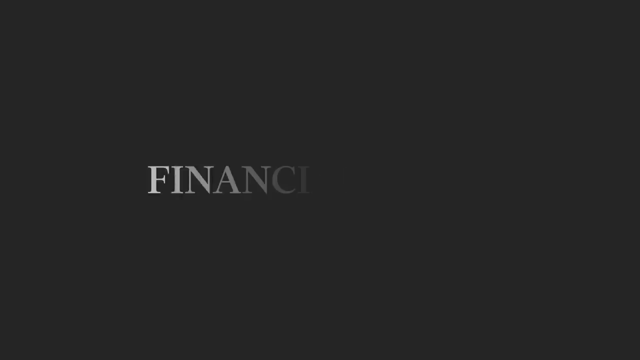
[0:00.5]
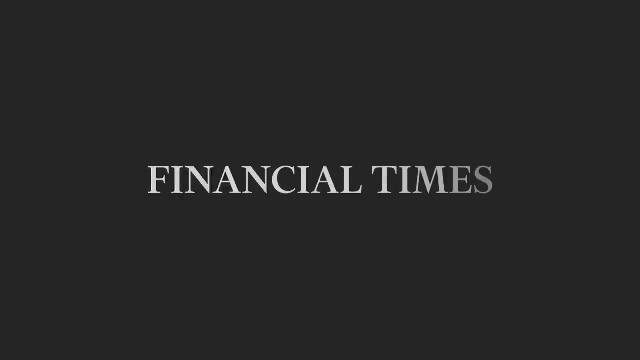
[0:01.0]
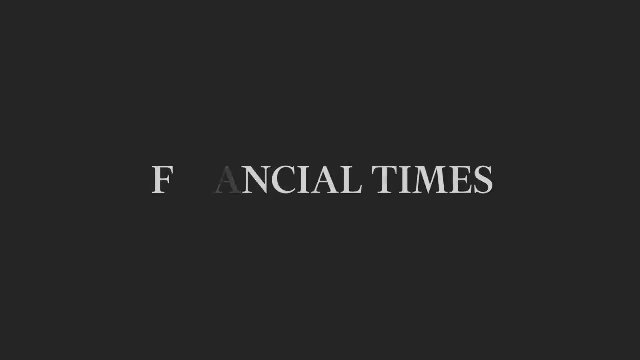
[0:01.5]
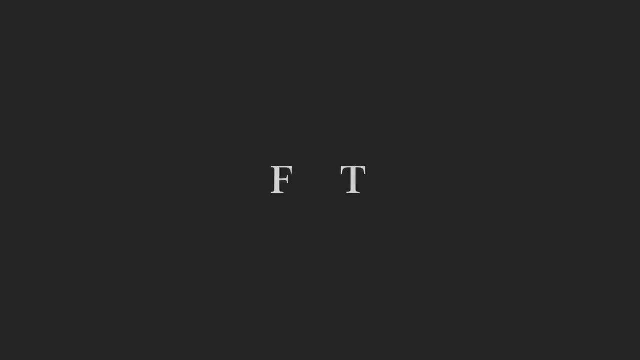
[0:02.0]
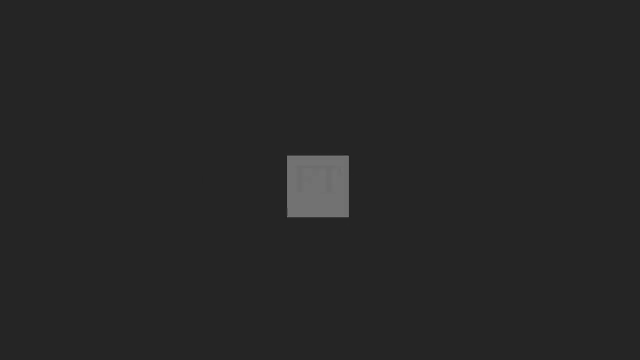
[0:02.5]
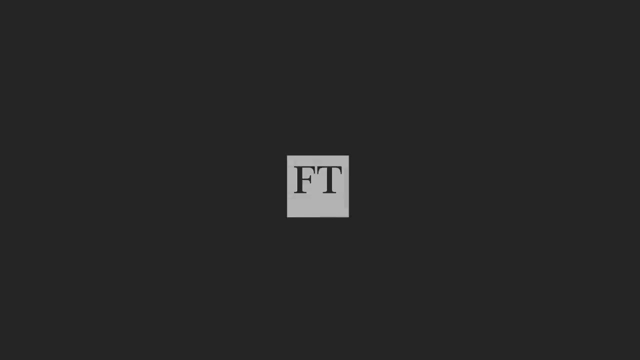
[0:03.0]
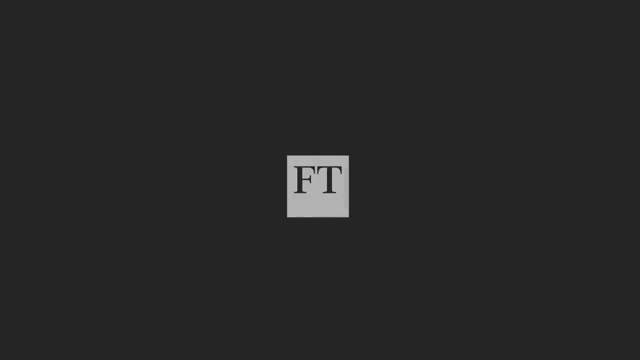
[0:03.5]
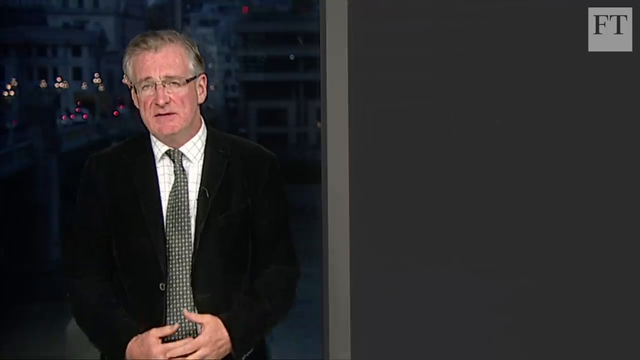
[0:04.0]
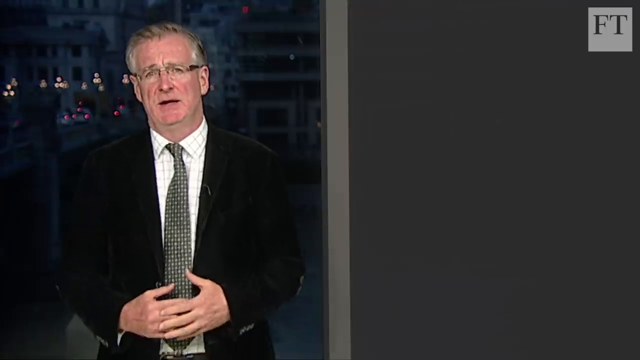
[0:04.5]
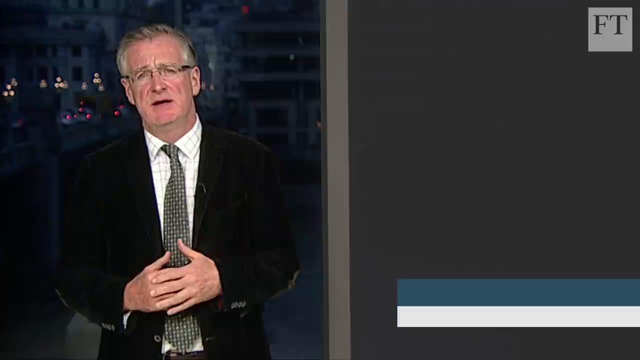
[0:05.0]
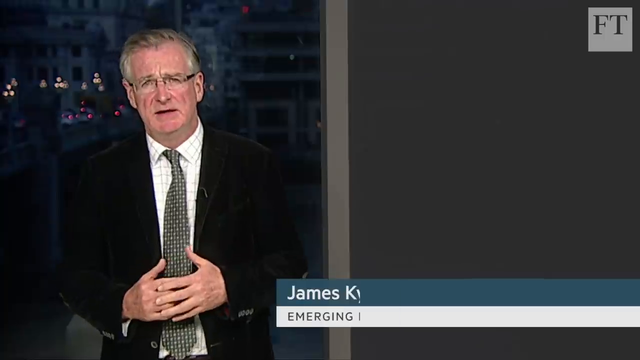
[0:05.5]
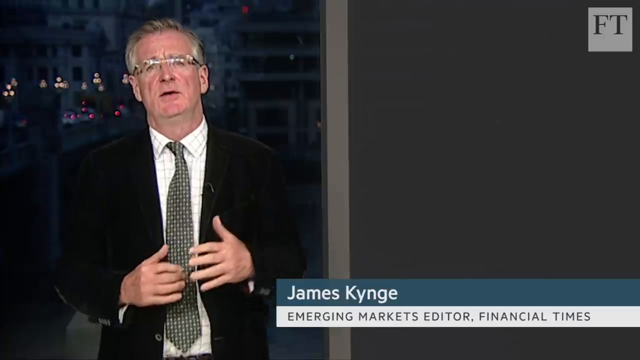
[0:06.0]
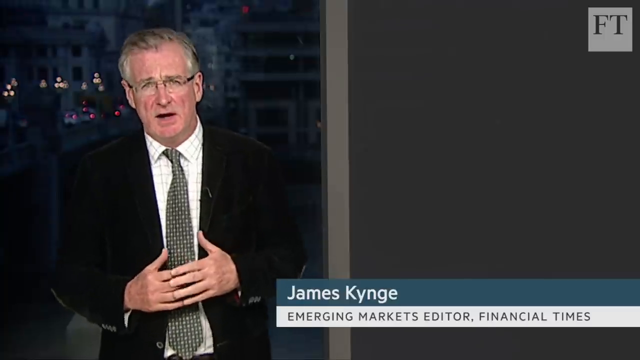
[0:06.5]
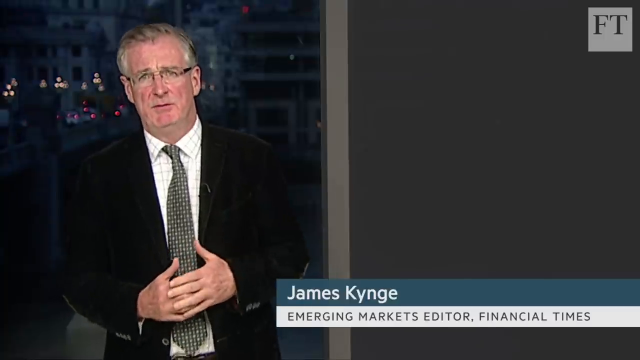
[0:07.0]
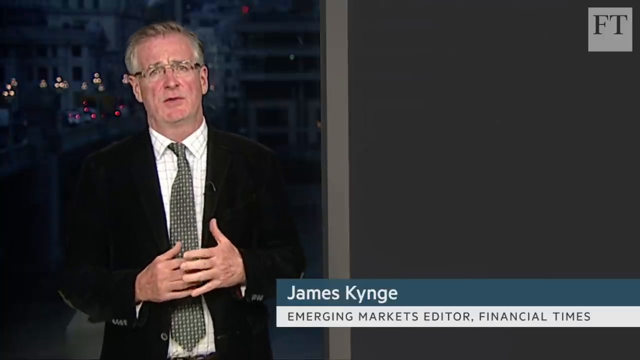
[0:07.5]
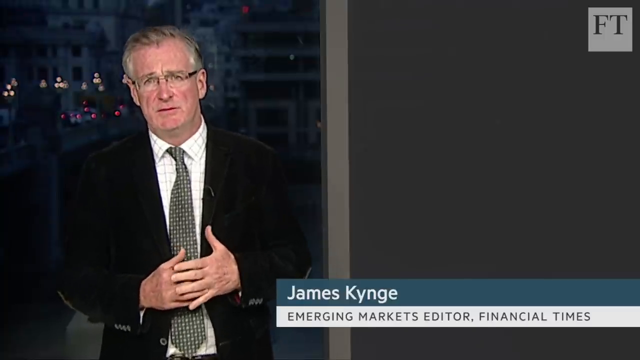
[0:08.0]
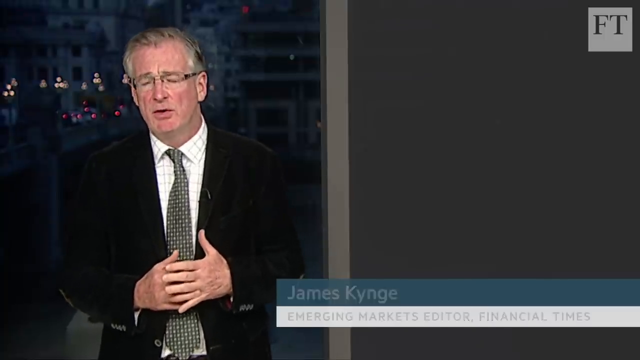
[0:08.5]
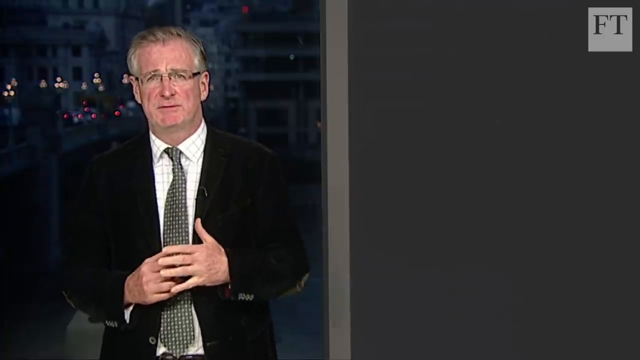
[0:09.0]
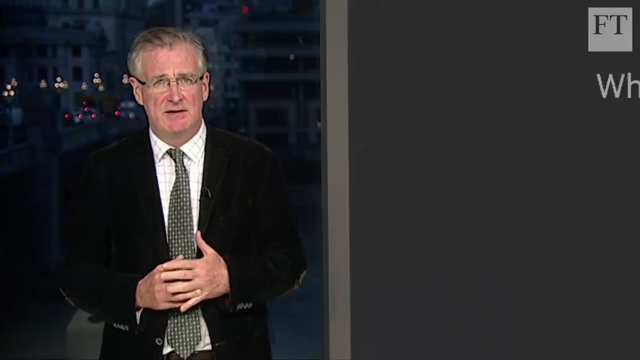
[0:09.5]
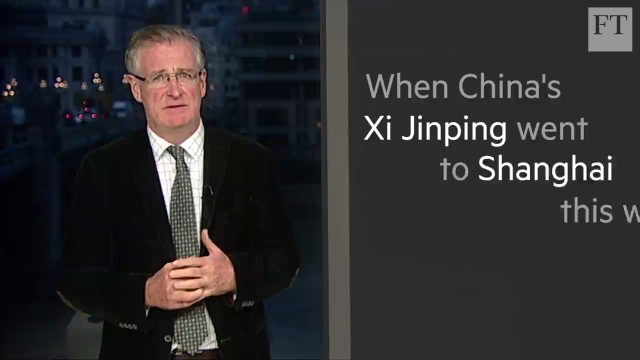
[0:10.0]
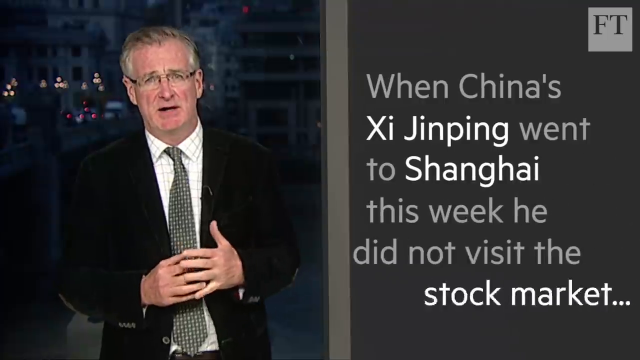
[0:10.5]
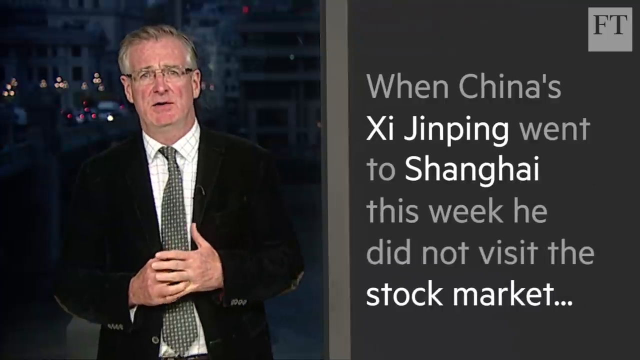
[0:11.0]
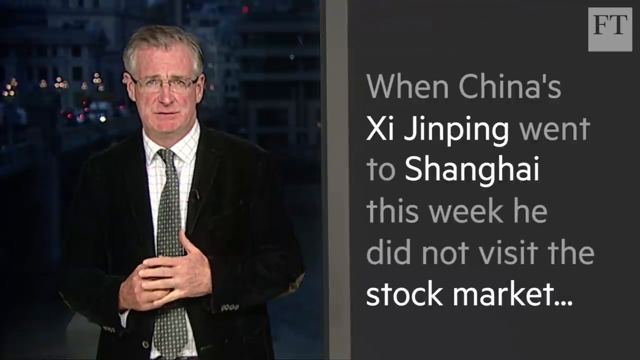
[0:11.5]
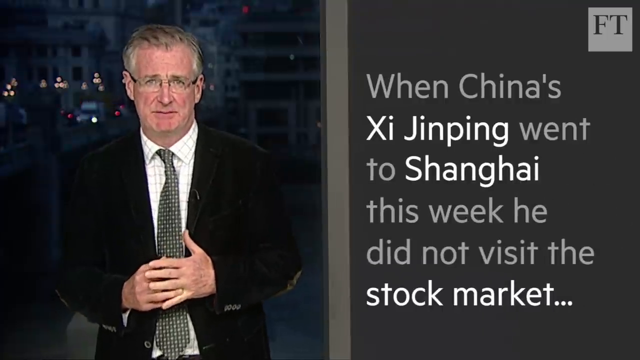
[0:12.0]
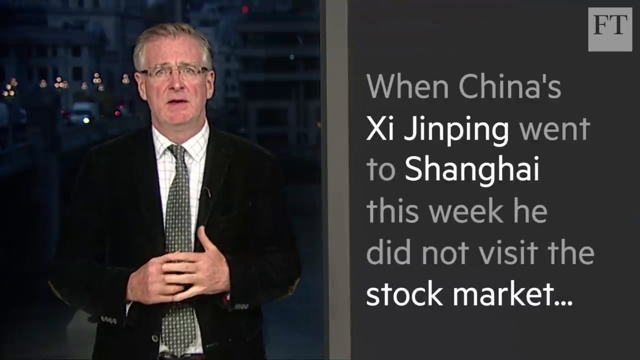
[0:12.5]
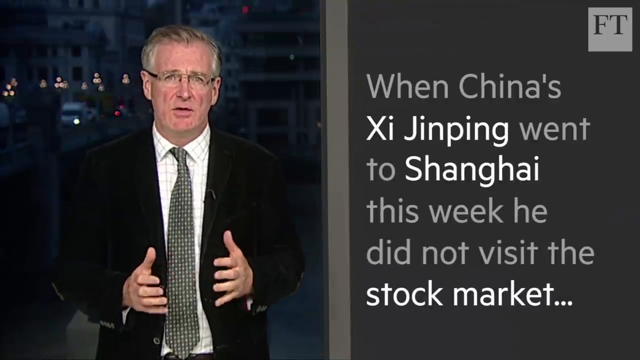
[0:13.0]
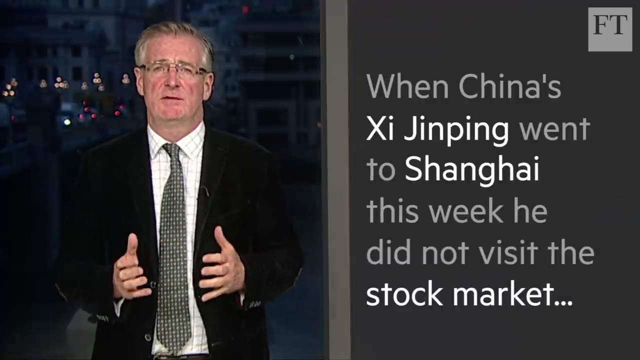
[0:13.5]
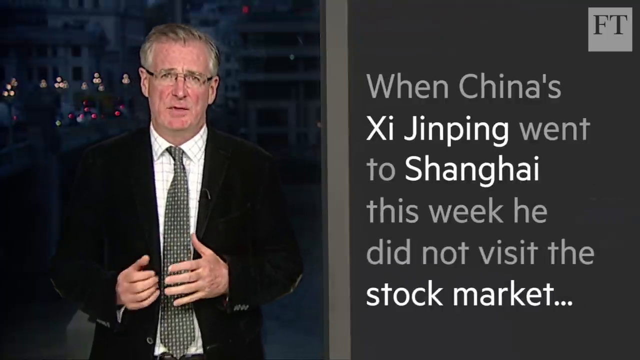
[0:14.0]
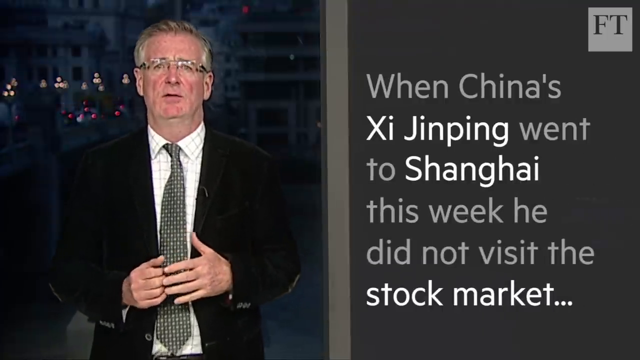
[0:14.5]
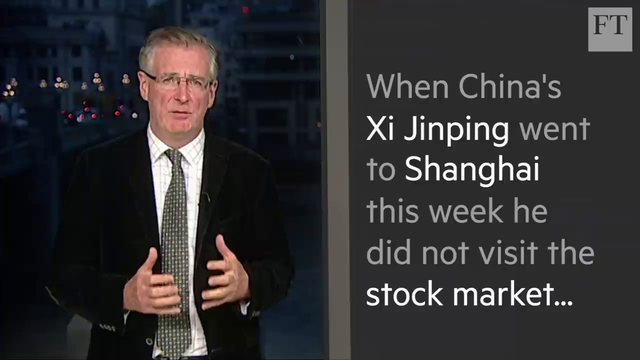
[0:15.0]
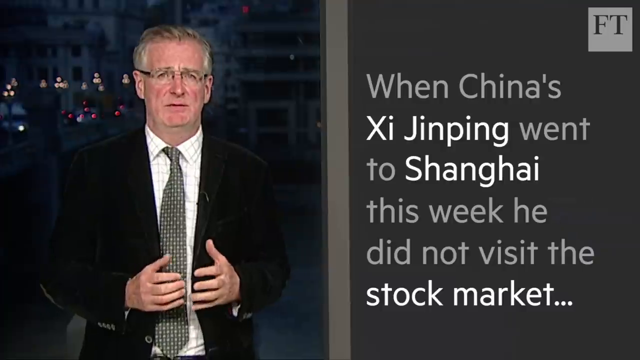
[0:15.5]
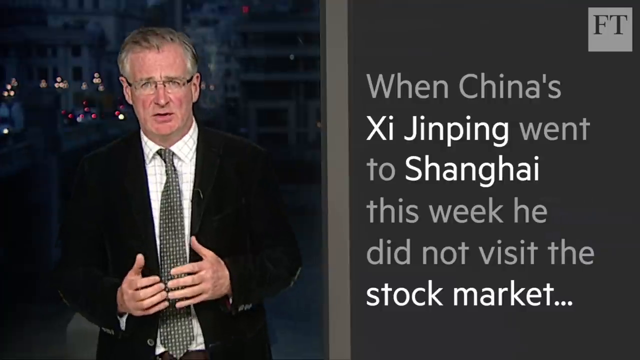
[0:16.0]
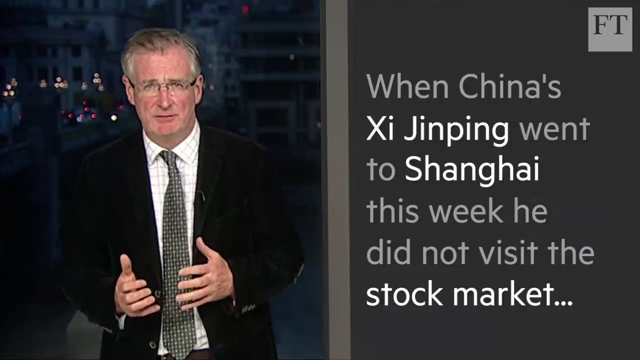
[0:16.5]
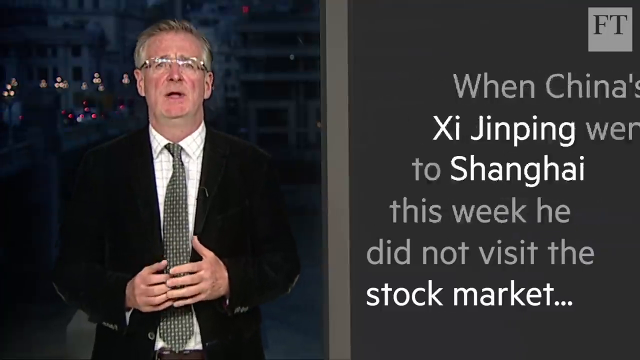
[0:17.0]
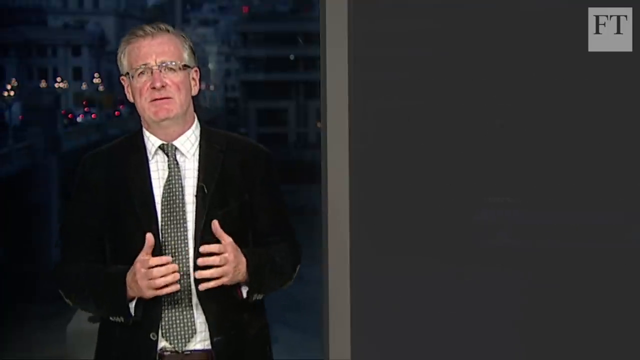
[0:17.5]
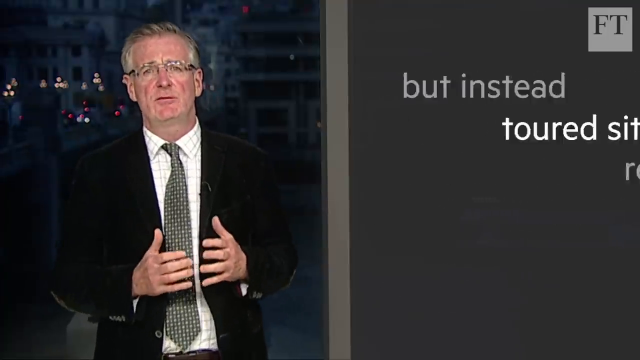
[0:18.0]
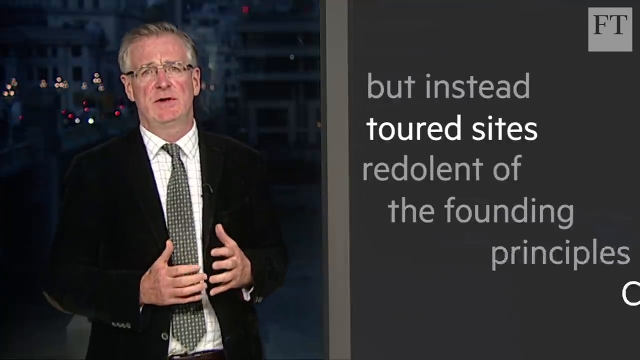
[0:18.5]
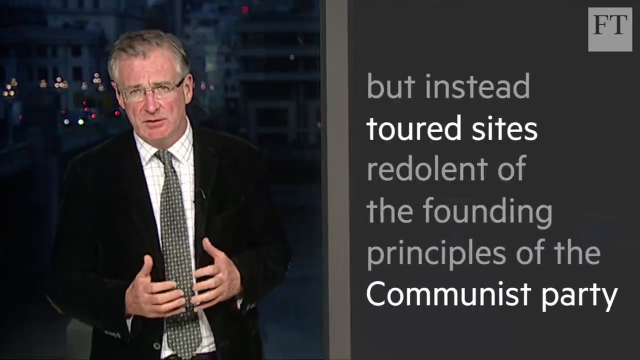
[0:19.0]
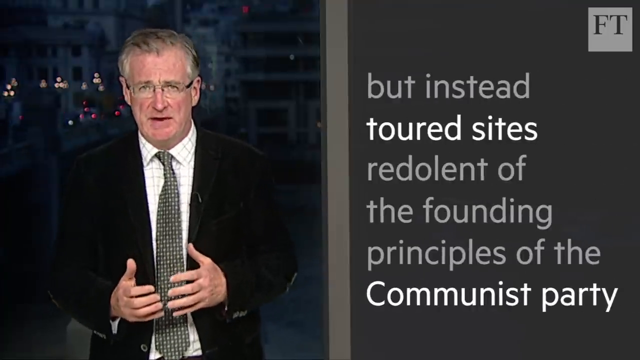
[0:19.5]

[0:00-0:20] The video opens on a black screen where the words "FINANCIAL TIMES" appear in all caps. This switches to the initials "FT" in dark gray against a light gray square in the center of the screen. The screen then changes to a newscaster on the left-hand side of the screen. He wears a dark jacket, a white check shirt and a dark gray patterned tie, along with glasses, and has graying hair pulled back off his forehead. He is standing in front of a window, behind which is what looks like a city with a busy roadway. The right-hand side of the screen is a large gray area; at its bottom, in a blue text box, his name appears: "James Kynge". Below that, in gray, it says "Emerging Markets Editor, Financial Times". As the man talks, the text box on the right reads "When China's Xi Jinping went to Shanghai this week, he did not visit the stock market but instead towards sites redolent of the founding principles of the Communist Party."